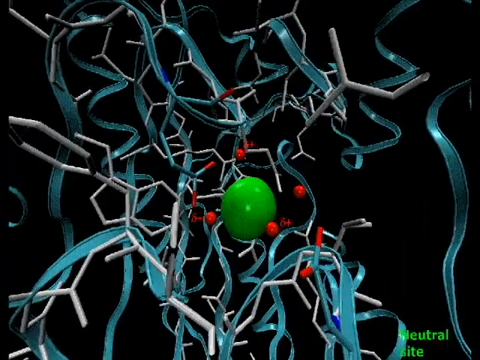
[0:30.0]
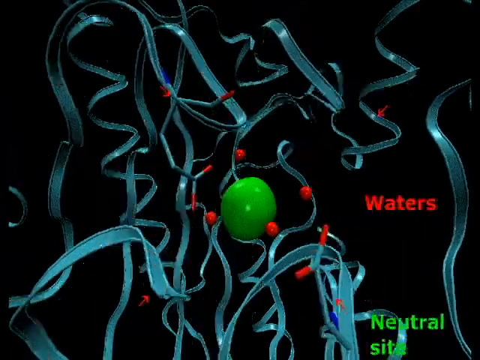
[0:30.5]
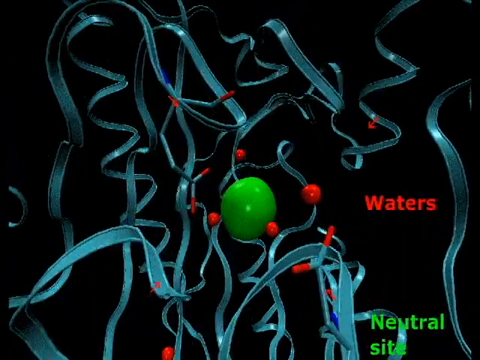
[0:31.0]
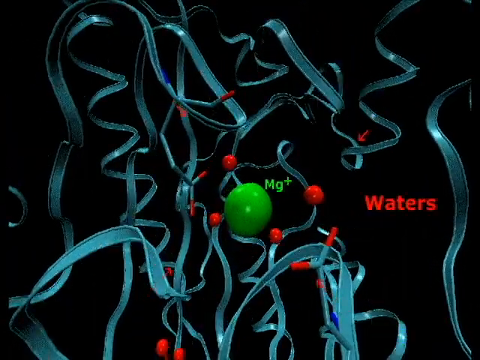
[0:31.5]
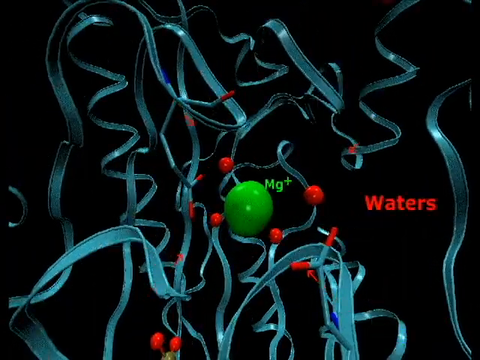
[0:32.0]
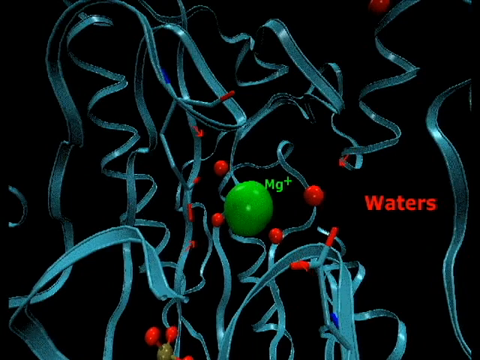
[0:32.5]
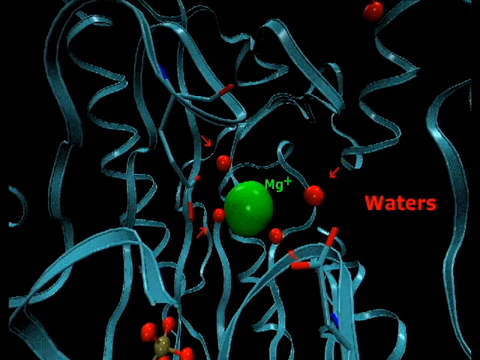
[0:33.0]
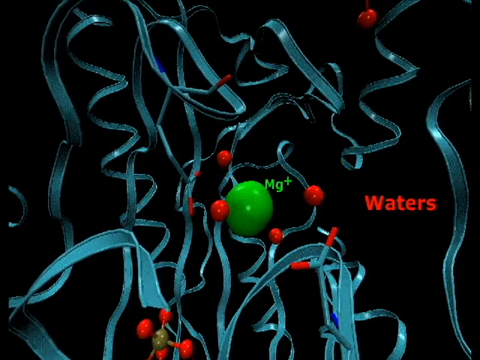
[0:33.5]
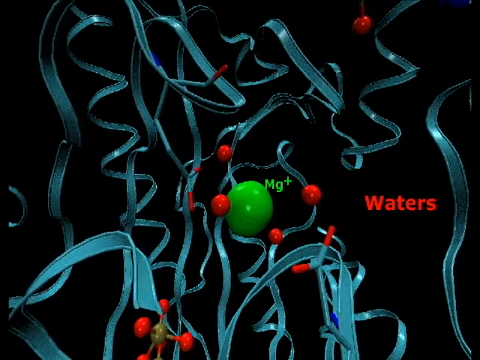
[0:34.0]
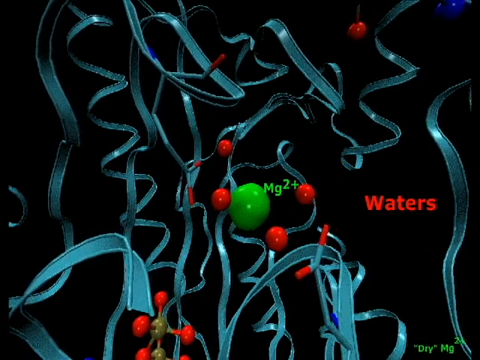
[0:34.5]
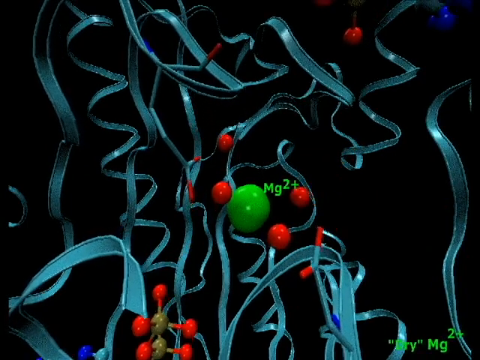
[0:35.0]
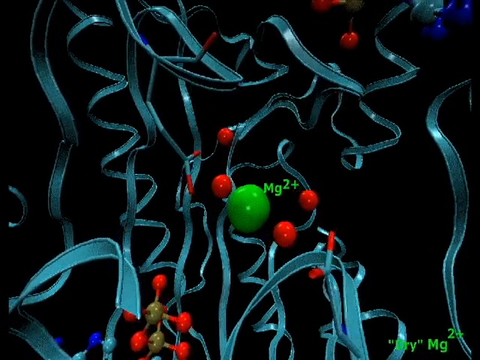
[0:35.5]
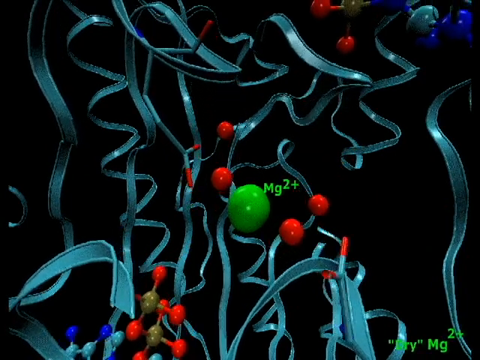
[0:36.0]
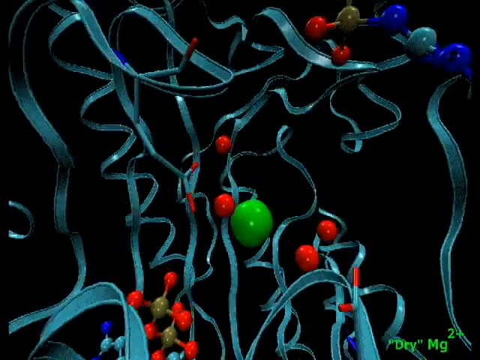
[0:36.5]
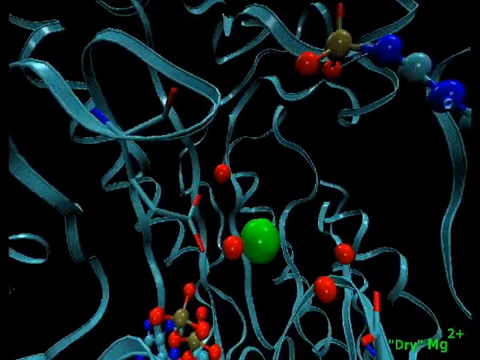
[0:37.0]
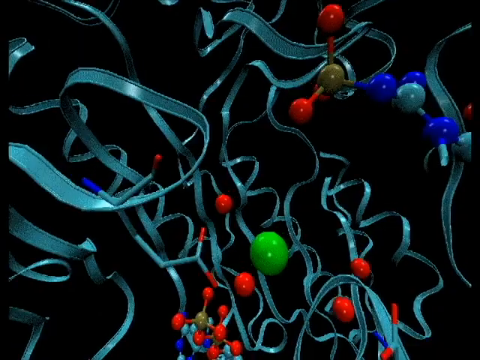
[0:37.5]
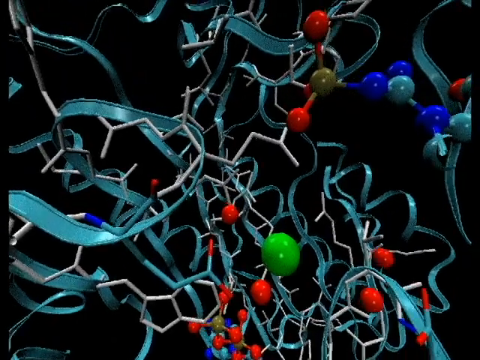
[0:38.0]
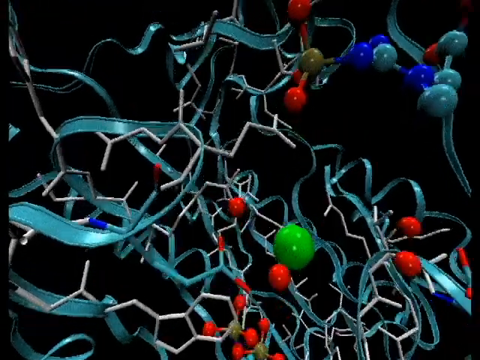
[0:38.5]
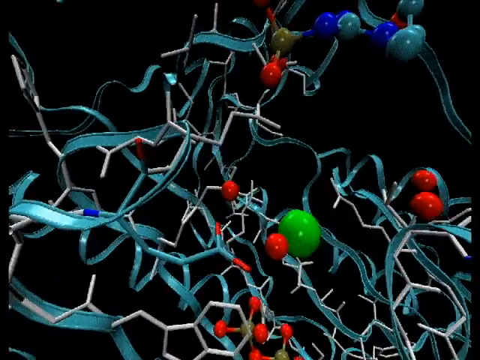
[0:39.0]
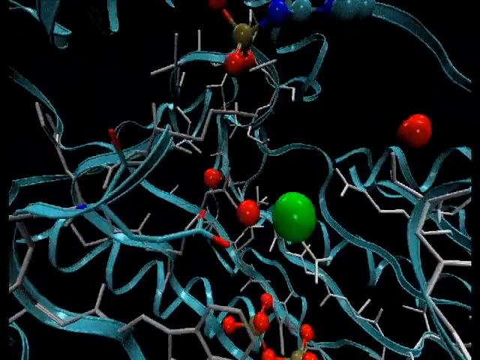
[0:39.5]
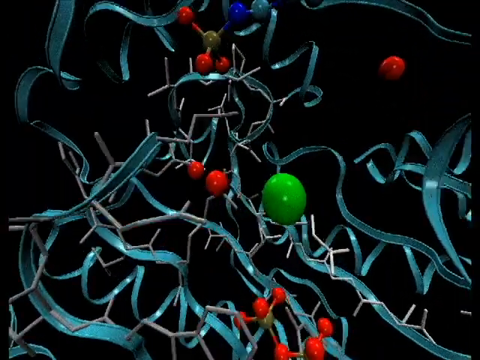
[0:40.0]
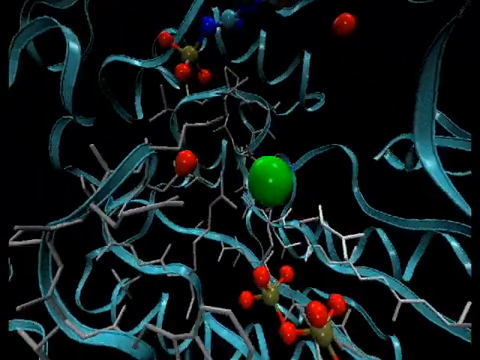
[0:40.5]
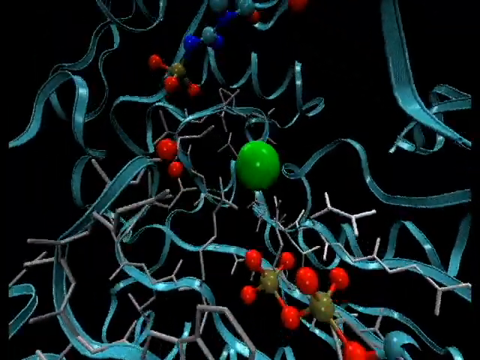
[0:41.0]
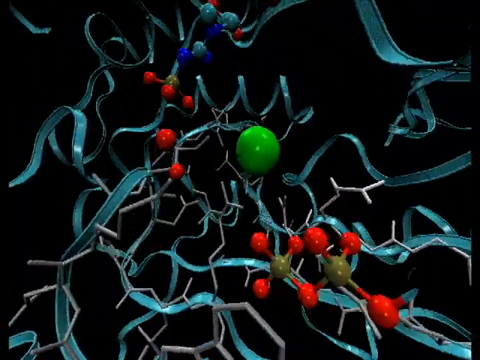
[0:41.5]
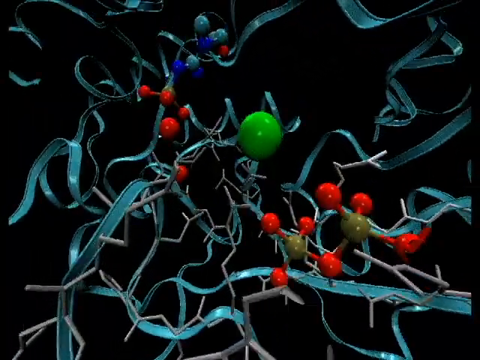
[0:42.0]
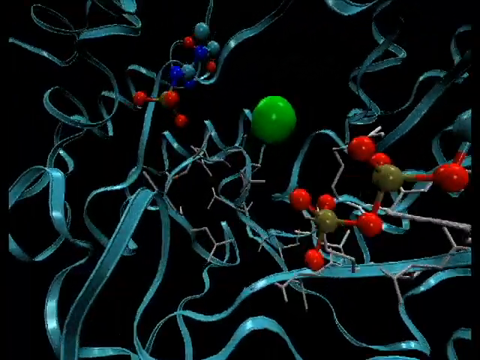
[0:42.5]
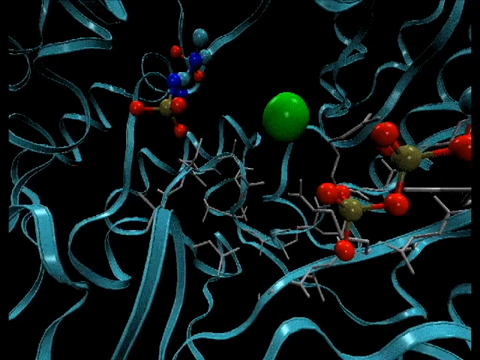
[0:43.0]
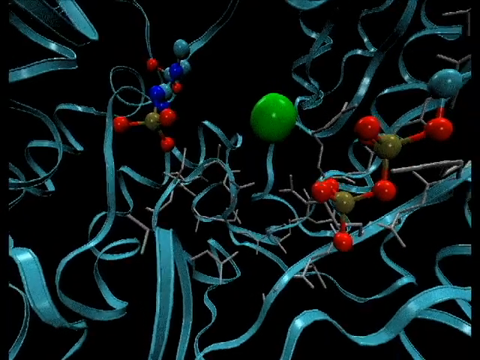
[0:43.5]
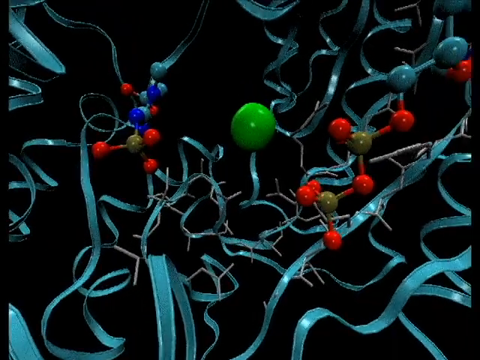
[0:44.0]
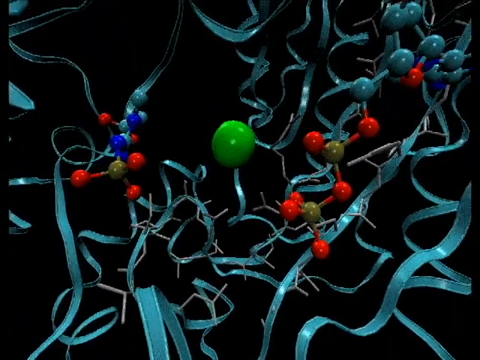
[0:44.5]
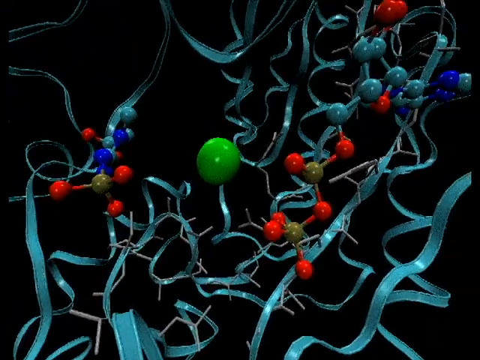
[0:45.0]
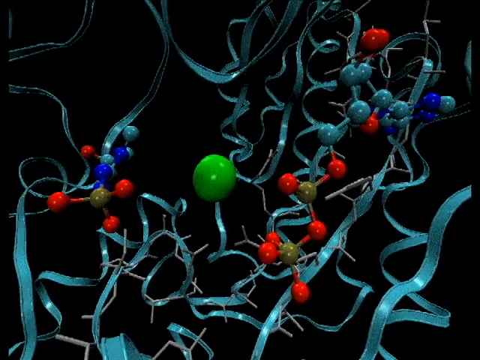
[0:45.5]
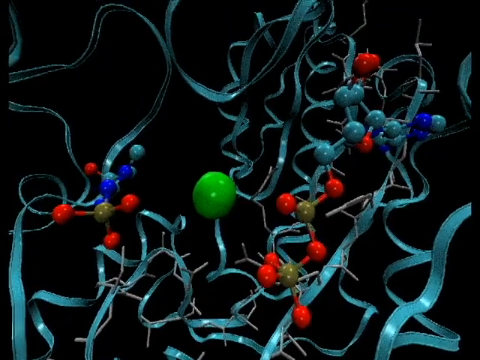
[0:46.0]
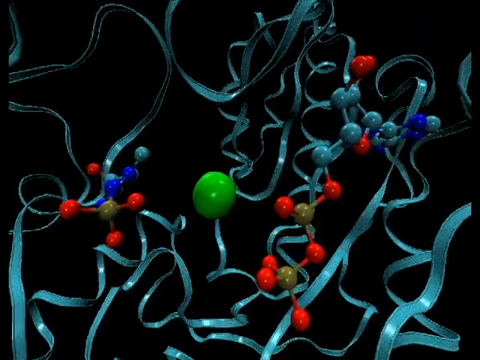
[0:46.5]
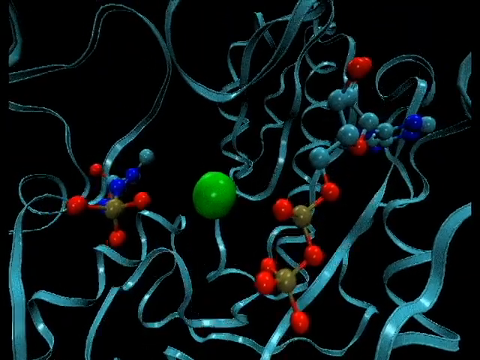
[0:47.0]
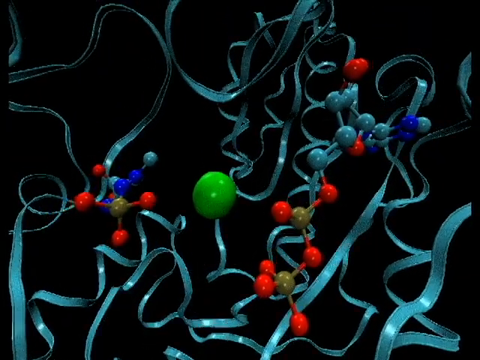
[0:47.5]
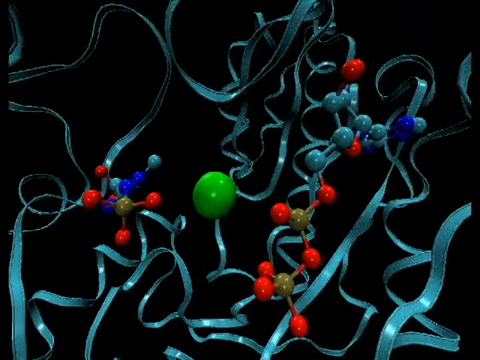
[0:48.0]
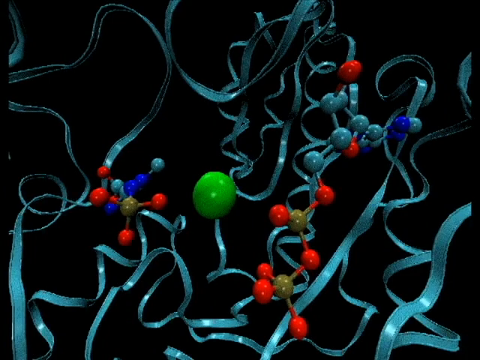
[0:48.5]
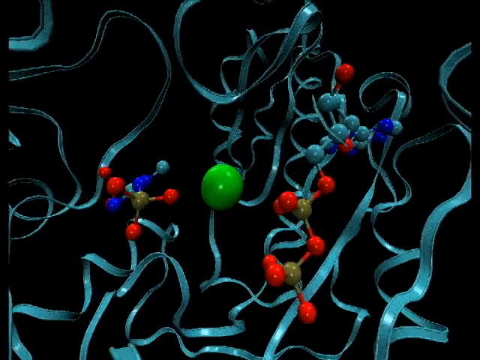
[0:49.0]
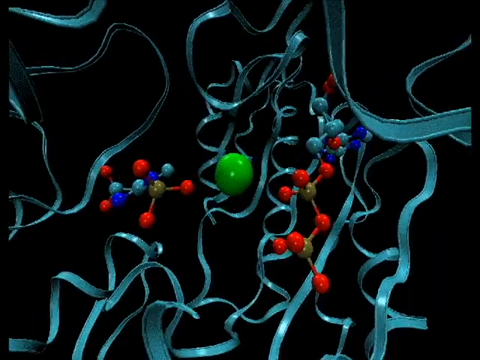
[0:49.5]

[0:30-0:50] A three-dimensional representation of a molecule, apparently a protein, shows its central bonding site. The camera is zoomed in quite close on the three-dimensional structure, showing a green magnesium ion, Mg+, surrounded in red by various parts of the molecule that are labelled as "waters". The Mg+ ion becomes Mg2+. The camera then rotates on two different axes to give a different view of the same molecule. Two other molecules move in towards the main molecule and bond with it; this apparently demonstrates the interactions between an ADP molecule, a creatine kinase protein, and creatine phosphate. The three-dimensional structure of the protein is very complex.